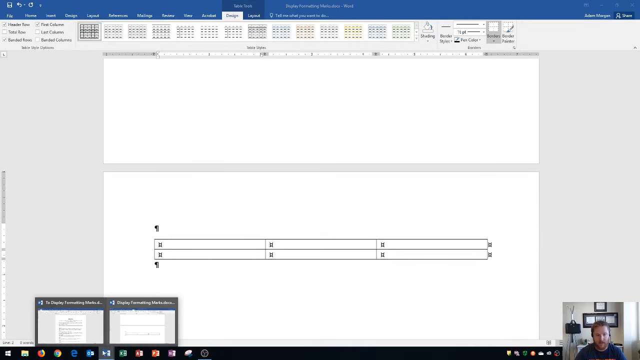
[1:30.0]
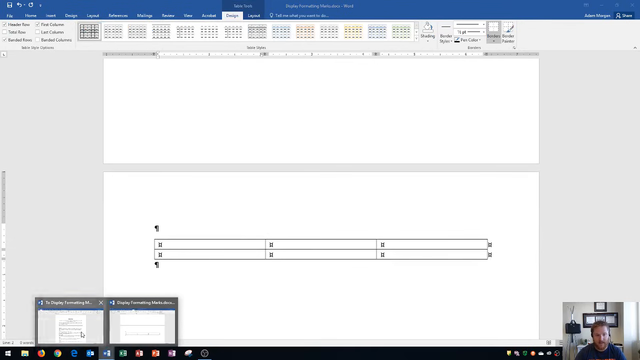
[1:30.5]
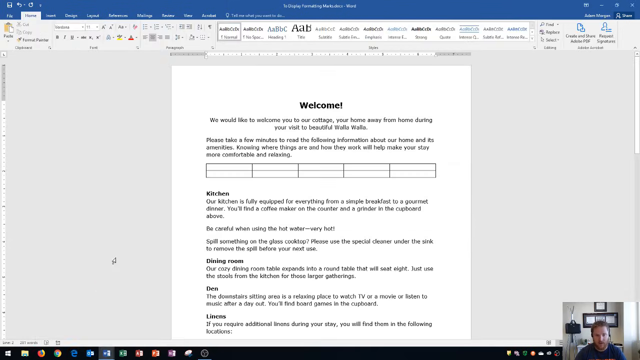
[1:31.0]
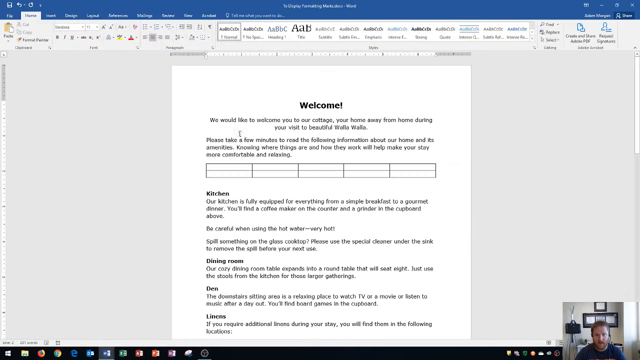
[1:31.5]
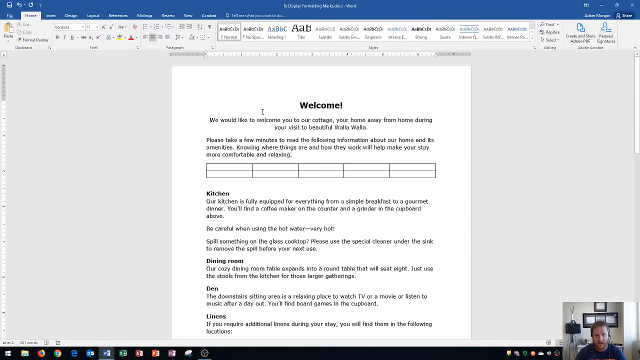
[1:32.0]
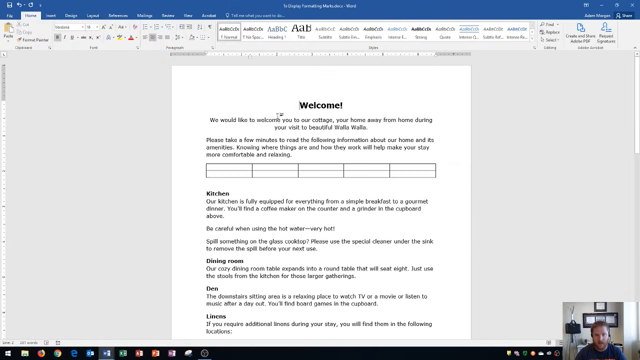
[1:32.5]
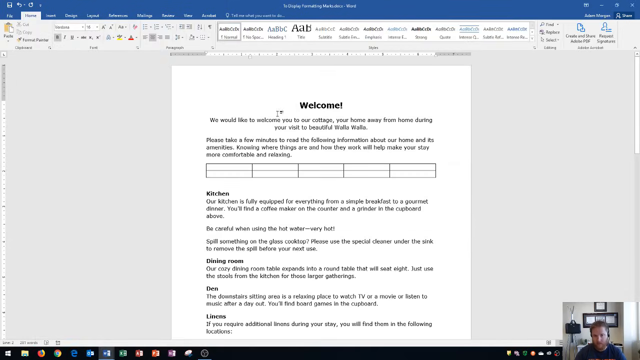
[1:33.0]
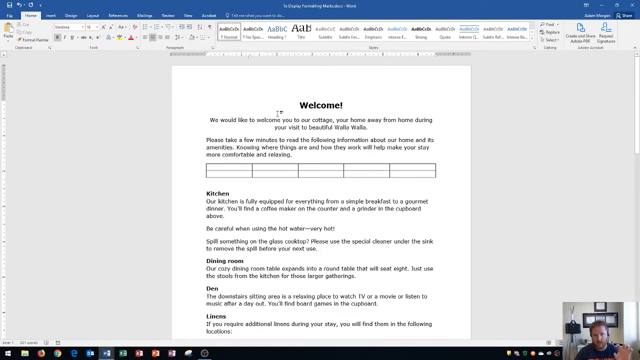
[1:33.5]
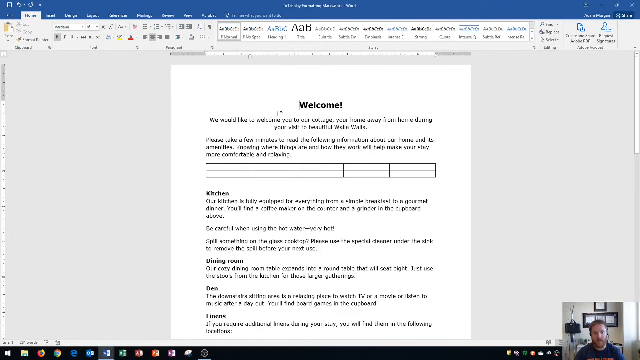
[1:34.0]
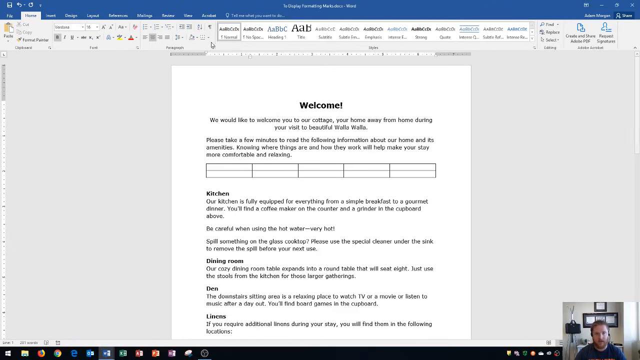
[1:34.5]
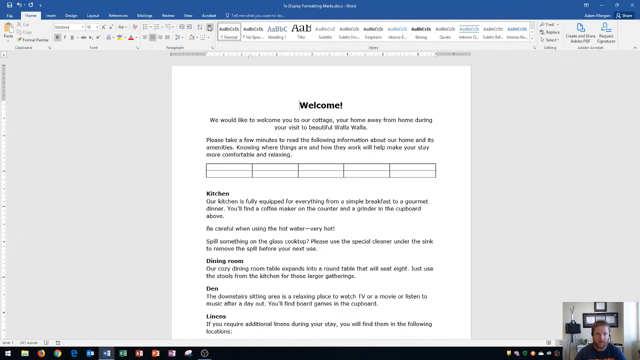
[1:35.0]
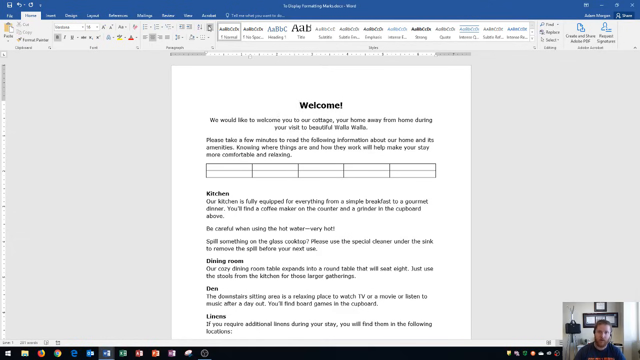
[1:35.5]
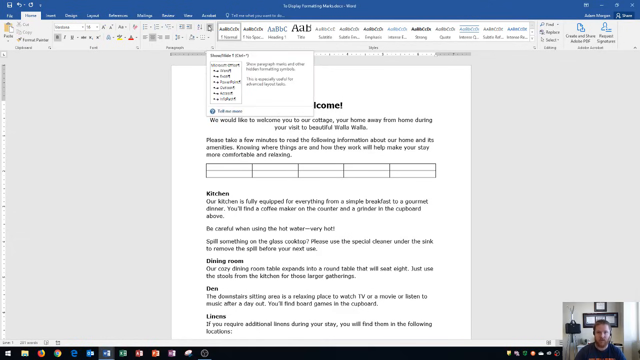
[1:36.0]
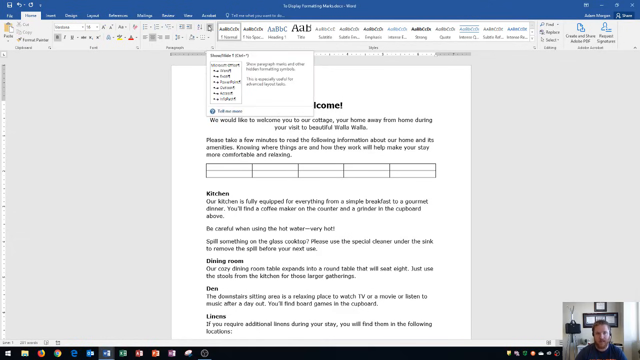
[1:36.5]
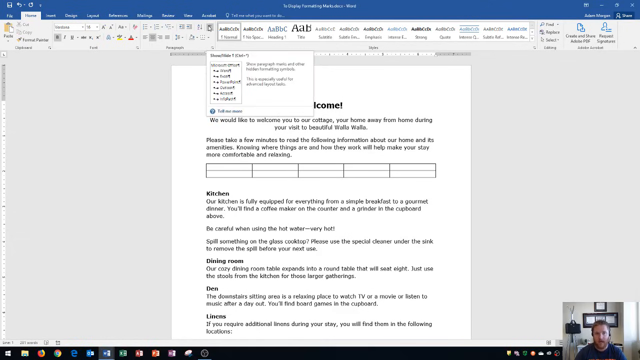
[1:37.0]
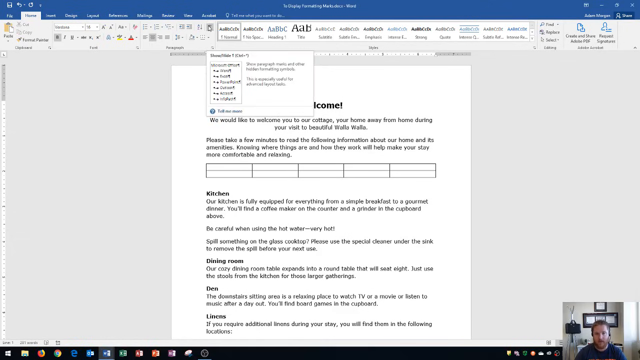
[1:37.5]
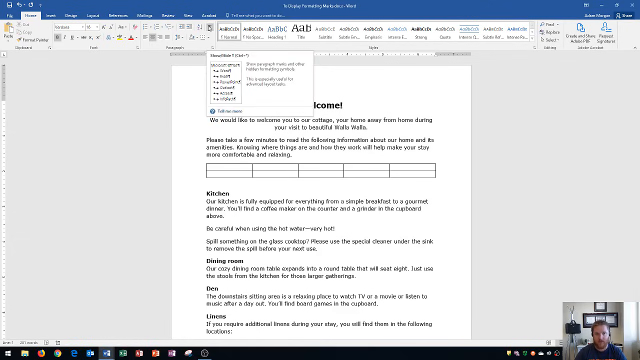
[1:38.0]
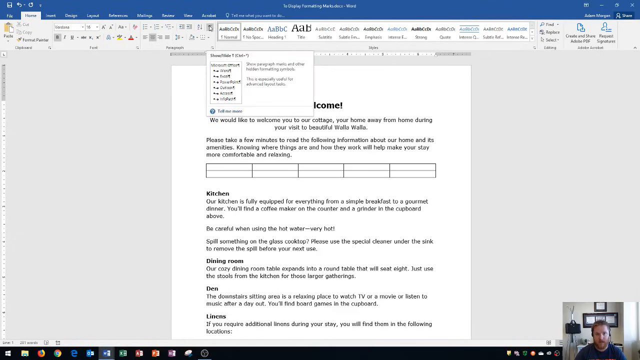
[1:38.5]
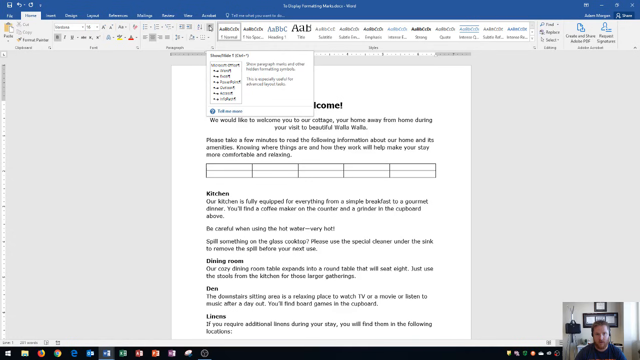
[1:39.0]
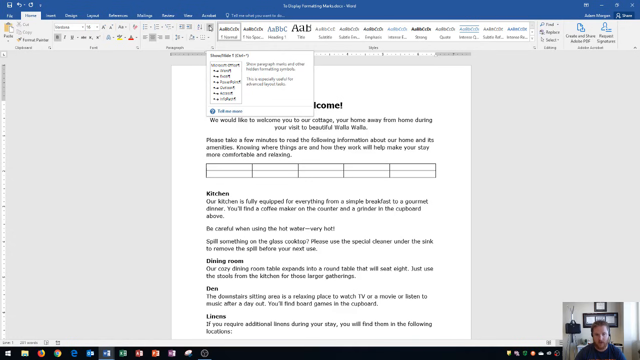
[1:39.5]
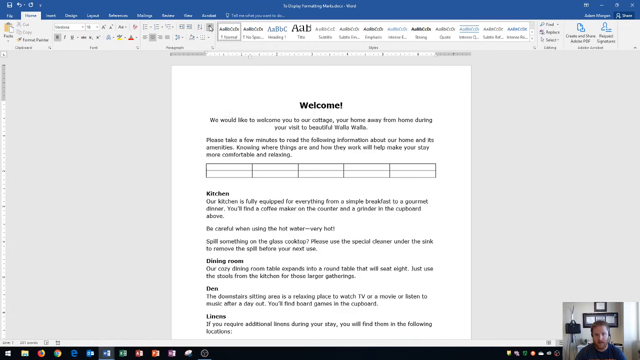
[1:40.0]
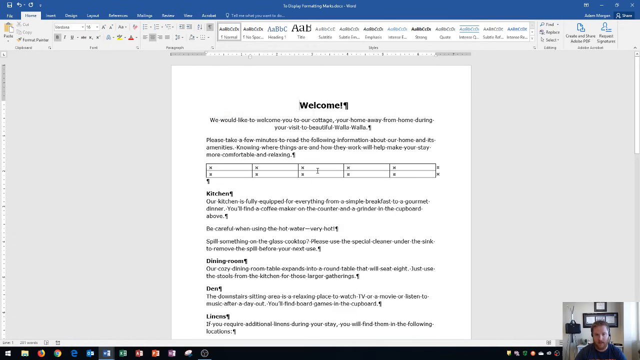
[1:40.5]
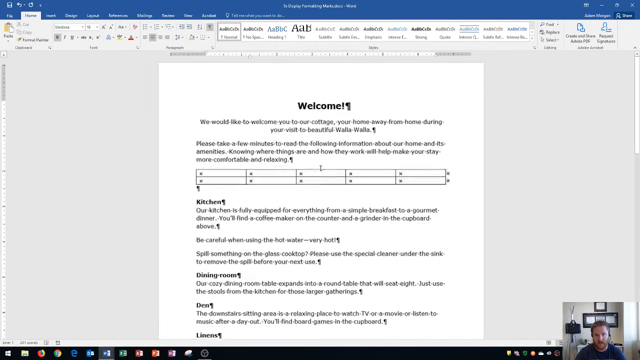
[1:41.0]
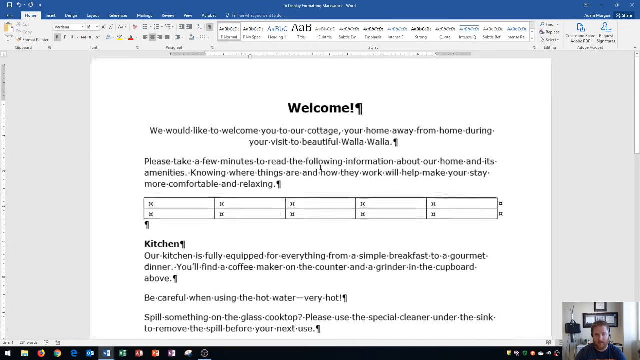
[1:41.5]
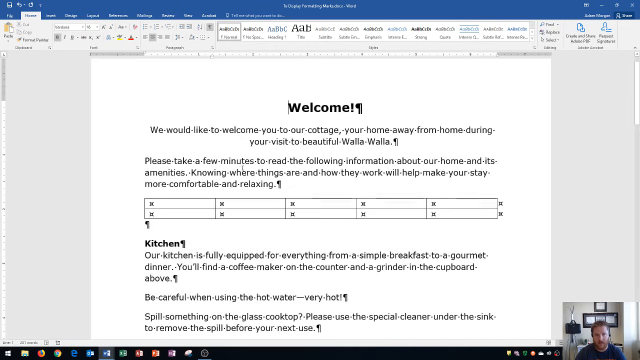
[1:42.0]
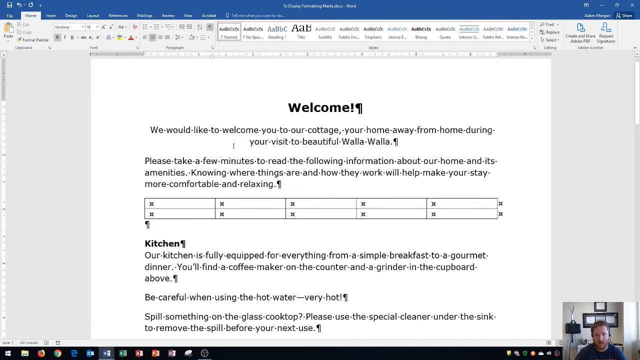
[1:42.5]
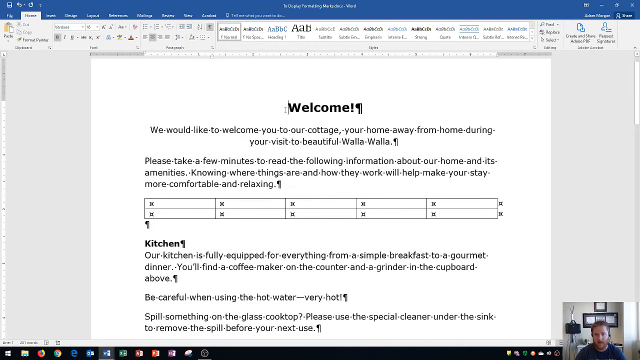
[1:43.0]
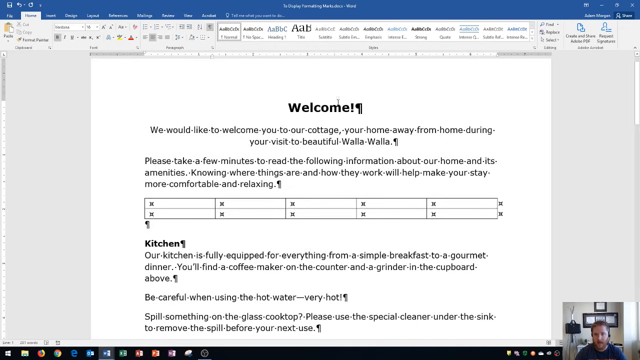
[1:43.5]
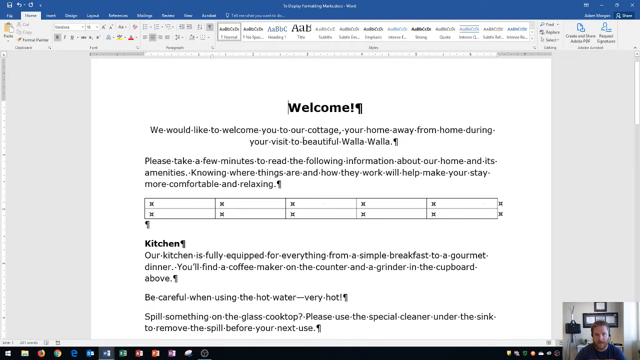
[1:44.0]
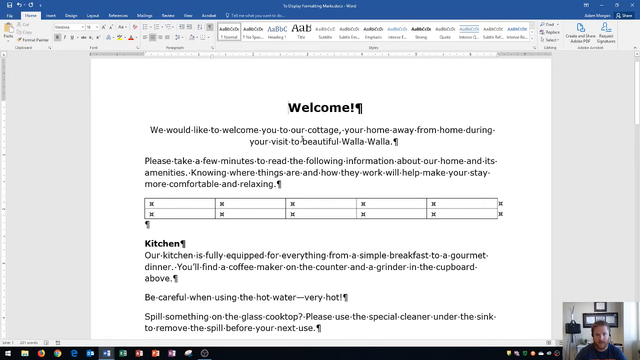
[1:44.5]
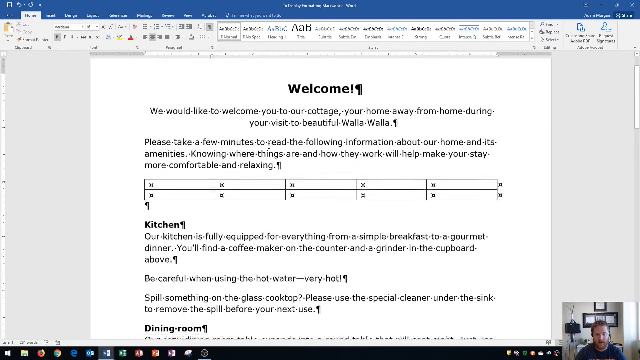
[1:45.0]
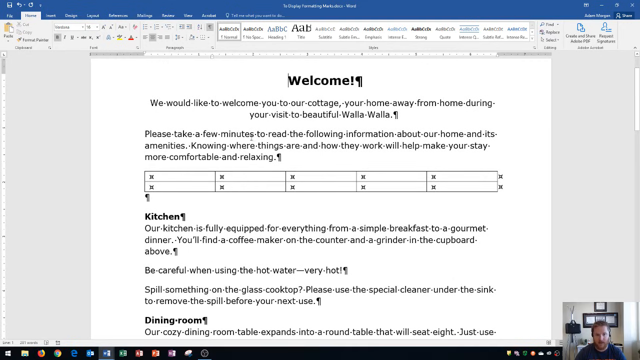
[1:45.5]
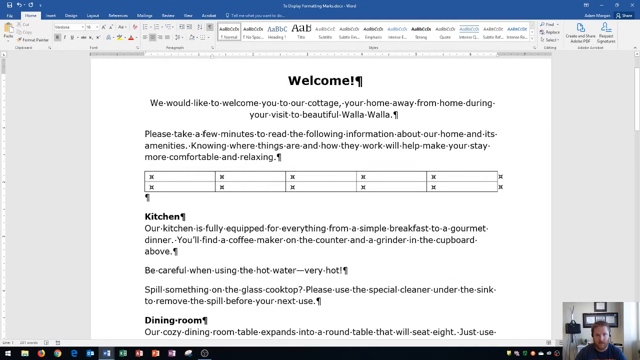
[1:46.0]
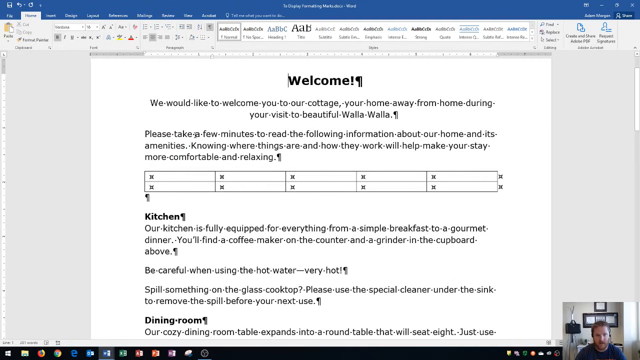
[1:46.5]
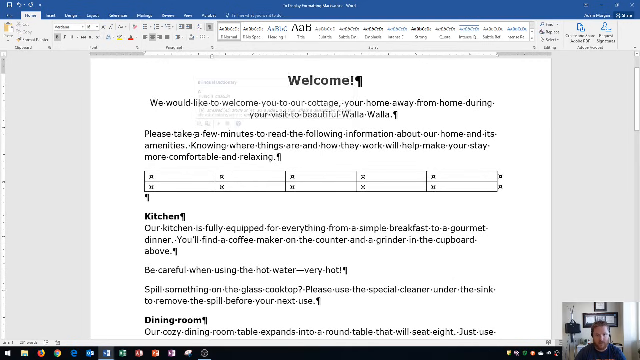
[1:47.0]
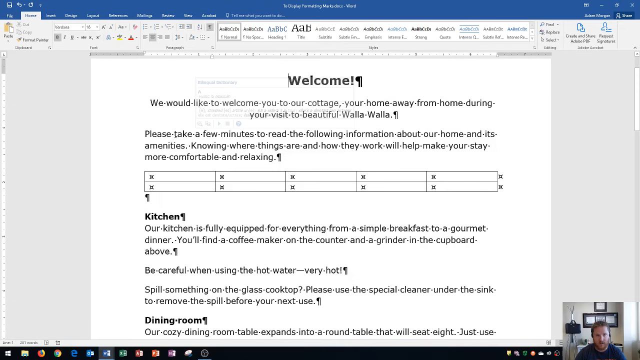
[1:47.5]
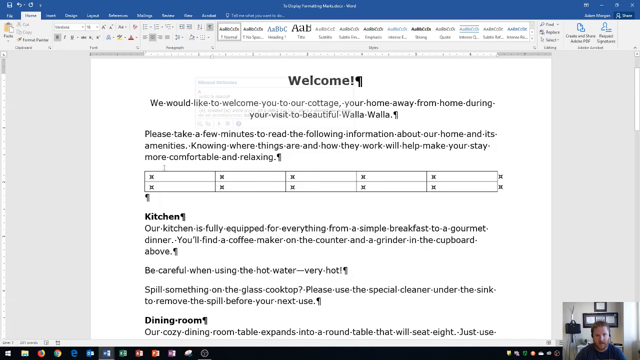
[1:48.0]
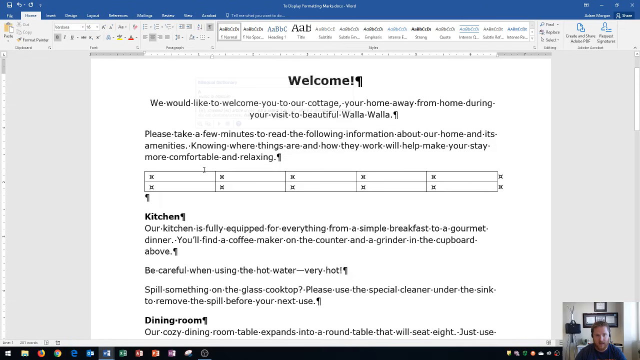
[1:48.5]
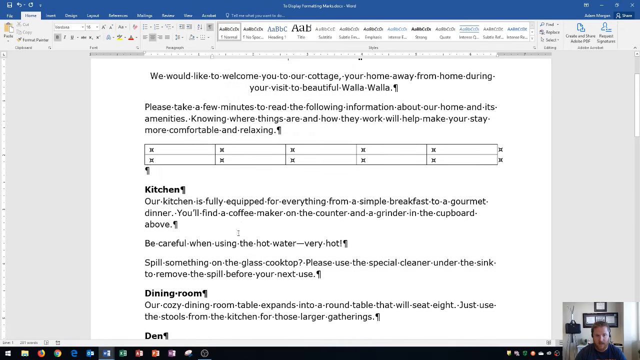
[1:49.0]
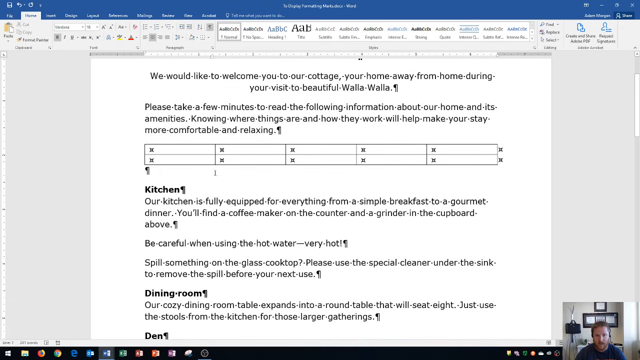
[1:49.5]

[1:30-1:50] A page on the screen says "welcome" in bold in the middle, followed by some typing, a table, and more text that says "we would like to welcome you to our cottage, your home away from home during your visit to beautiful Walla Walla. Please take a few minutes to read the following information about our home and its amenities. Knowing where things are and how they work will help make your stay more comfortable and relaxing." The table has nothing written inside. Below, it says "kitchen" with three small sentences and paragraphs, then "dining room" in bold with a description, then another section that is hard to read. The mouse scrolls to the top and clicks a button in the menu, bringing up a square, and clicks below it. The view zooms in and the mouse circles over "welcome" in bold black, scrolls down a little, and moves over the words "please take a few" from right to left. The man continues speaking in the small video on the right, turning his head slightly to the right and then back toward the camera.